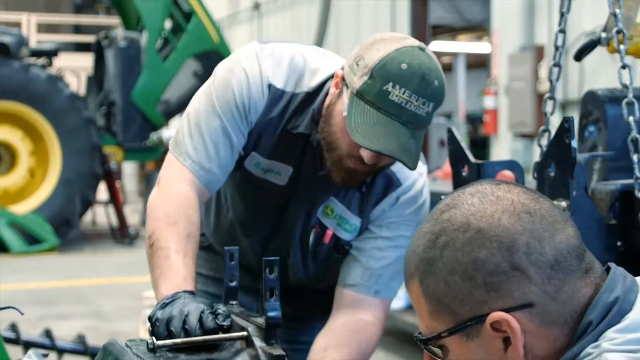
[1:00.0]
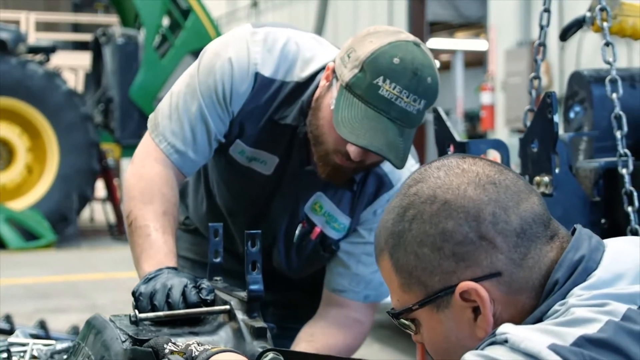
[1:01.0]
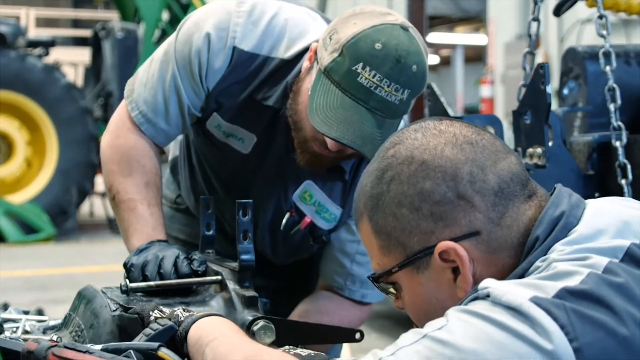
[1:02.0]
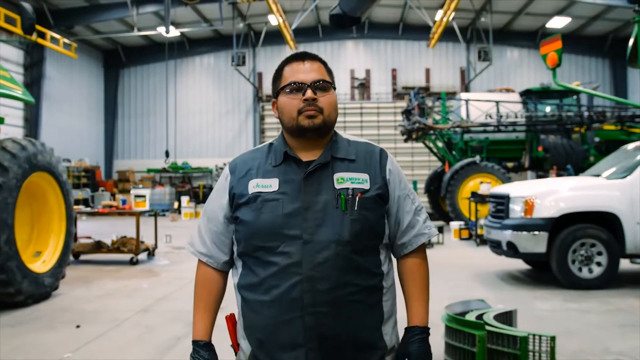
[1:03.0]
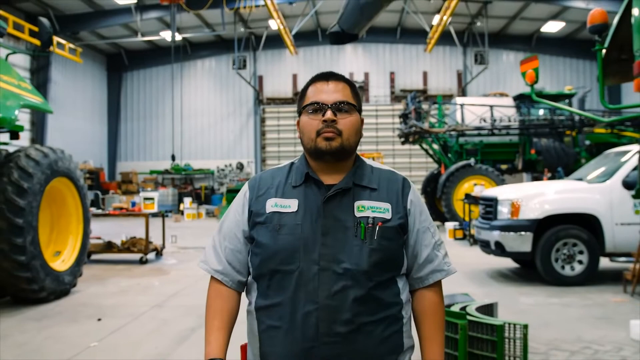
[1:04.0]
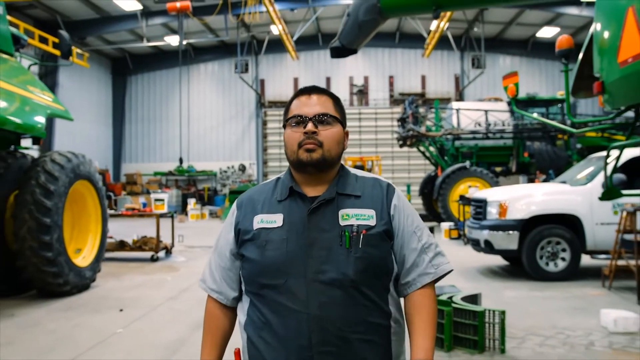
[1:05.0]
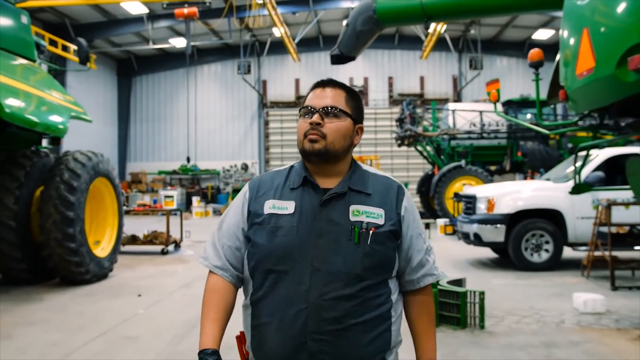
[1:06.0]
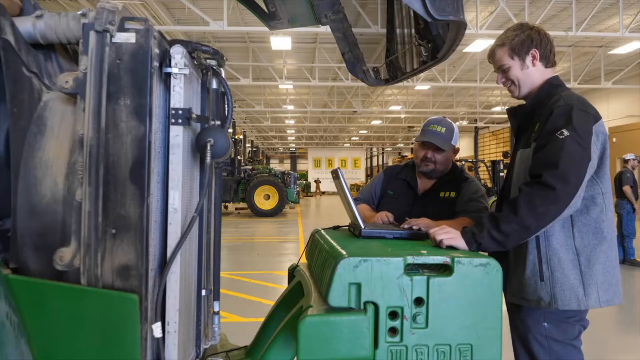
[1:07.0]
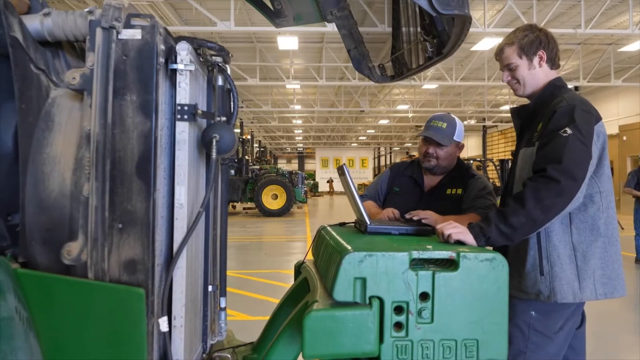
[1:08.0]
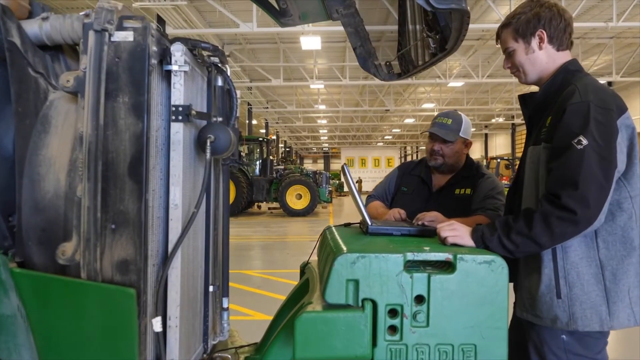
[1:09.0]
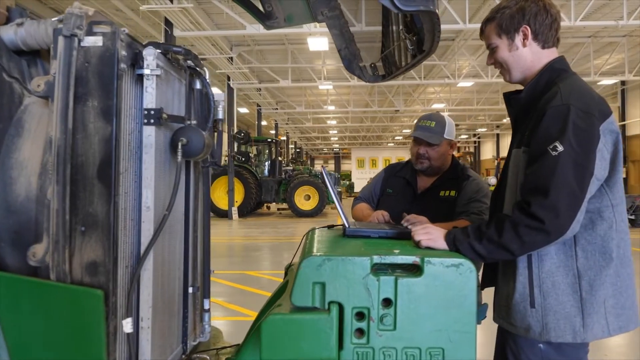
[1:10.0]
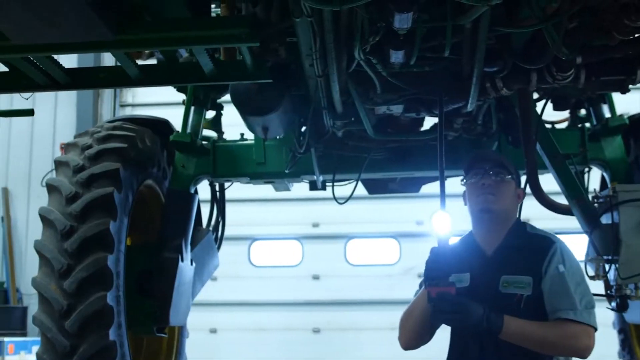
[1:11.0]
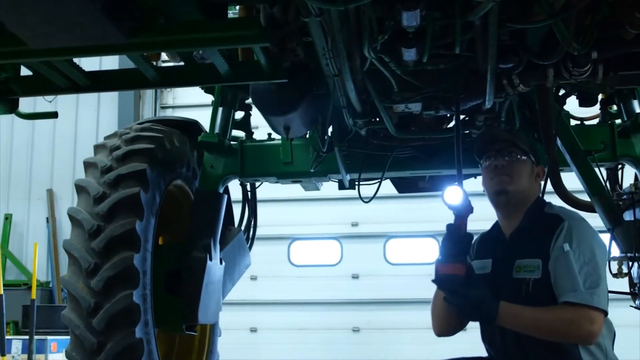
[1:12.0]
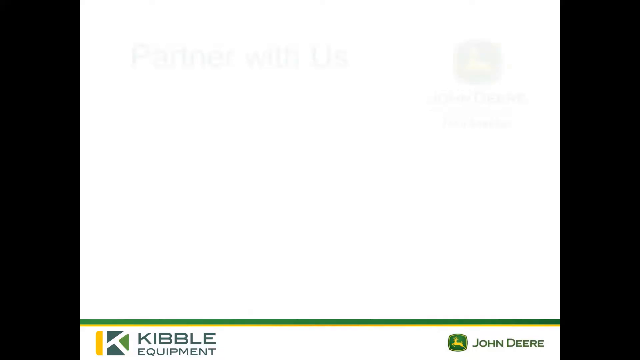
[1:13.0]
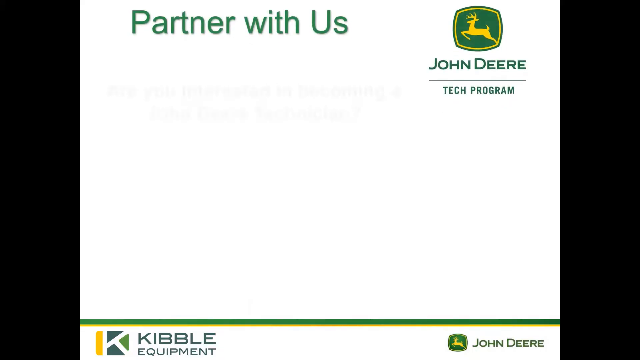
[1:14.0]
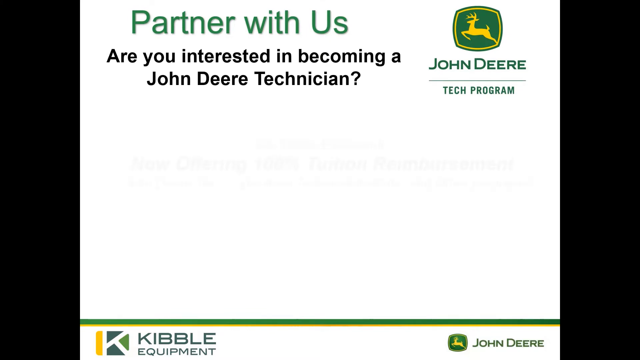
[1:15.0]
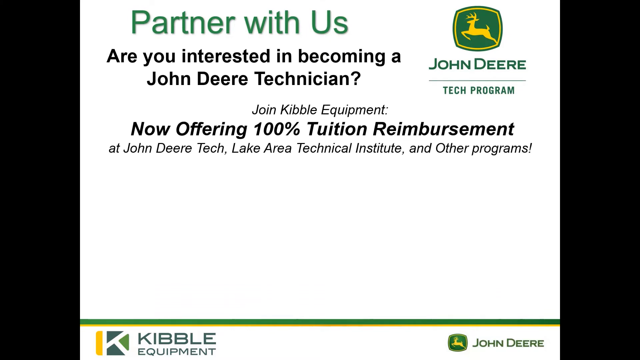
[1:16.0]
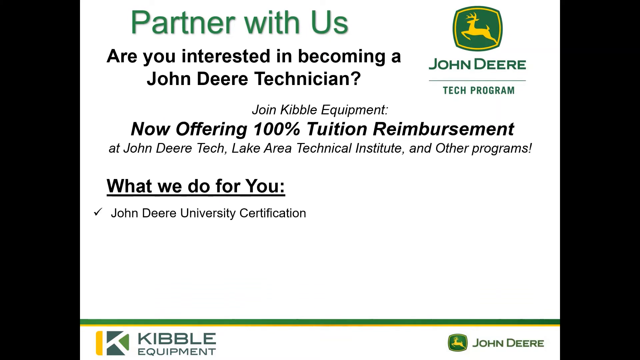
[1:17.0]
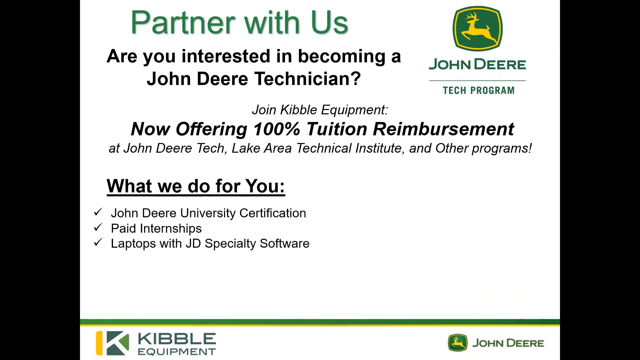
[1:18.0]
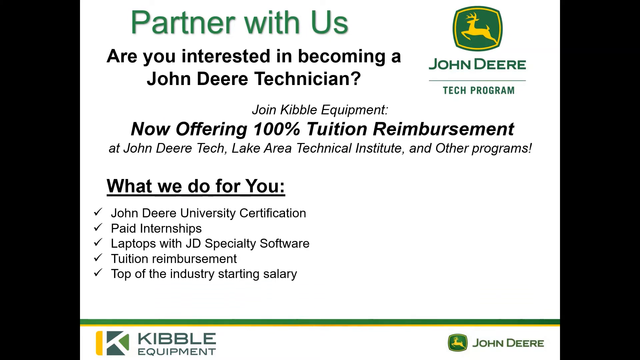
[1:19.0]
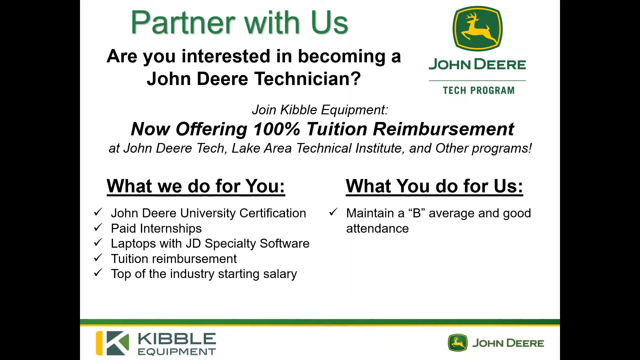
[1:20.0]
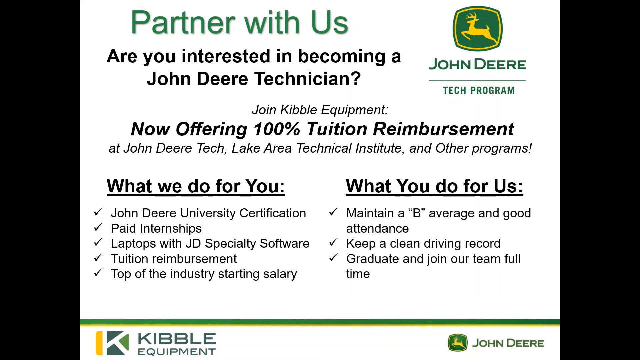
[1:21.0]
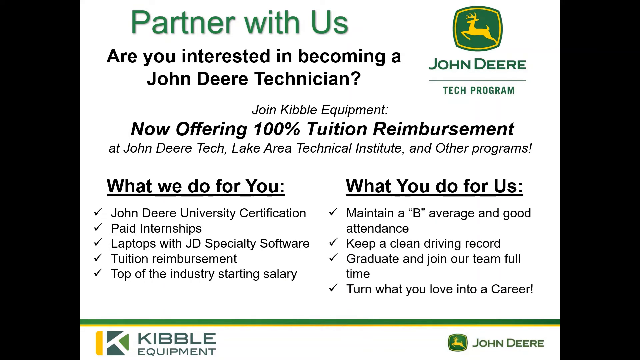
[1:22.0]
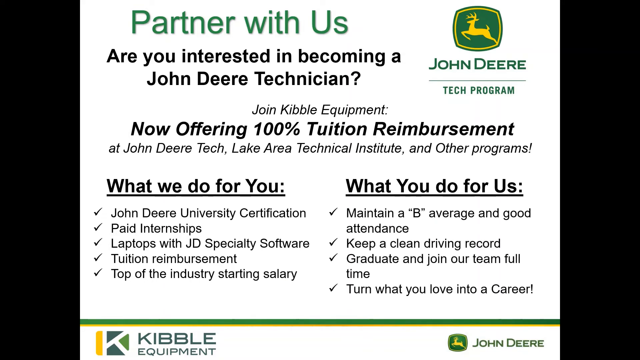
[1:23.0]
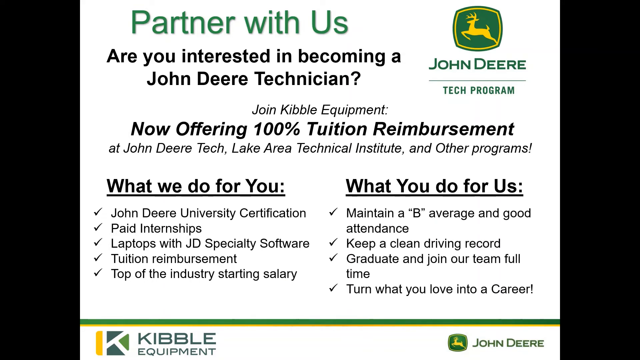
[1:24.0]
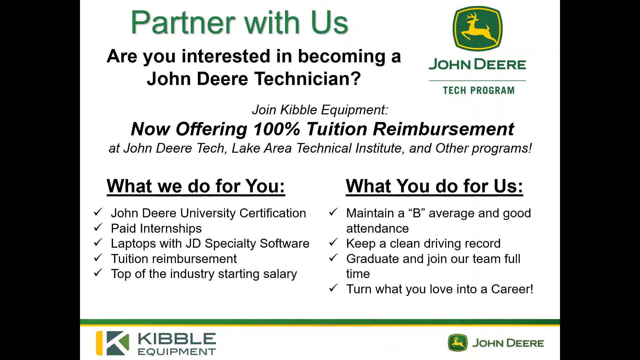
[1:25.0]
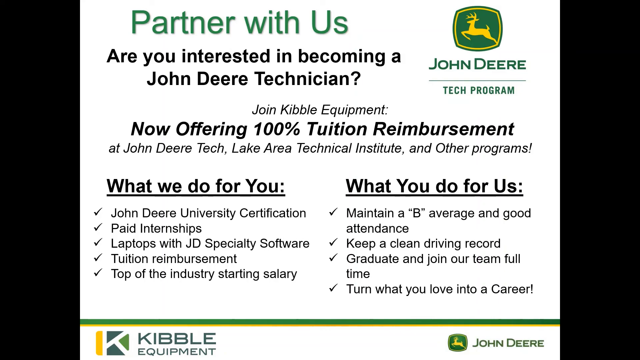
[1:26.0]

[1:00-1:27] Two men are working. The one in the back is shown more fully in the frame and has a black glove on his left hand. Only part of the man in the lower right-hand corner is visible, but the camera pans down a little to show a bit more of what they are working on. Next, a man is shown from about the waist up, wearing a dark and light grey shirt and safety goggles. He walks toward the viewer, with more John Deere equipment behind him and a white truck on the right side, looking right and then left as he walks. Two other people then work in a shop: the one toward the back is seated at some kind of green surface, while the man on the right side is standing. Both look at a computer screen on the green surface in front of them, and the view moves a little to the right as the standing man scrolls the mouse. A worker is then shown underneath a vehicle suspended above his head; mostly the underside and the back left wheel are visible. He holds a kind of bright light, shaped kind of like a drill at a right angle, and shines it up into the bottom of the vehicle. Finally, a white background in the center, leaving black bars on either side, comes on the screen. At the top, green text says "partner with us", and in the upper right-hand corner is a John Deere logo with "tech program" under it. Beneath "partner with us" it says "are you interested in becoming a John Deere technician?" and then "join Kibble Equipment now offering 100% tuition reimbursement at John Deere Tech Lake Area Technical Institute and other programs". A column headed "what we do for you" lists checkmarked items: "John Deere University Certification", "paid internships", and "laptops with JD specialty software tuition reimbursement top of the industry starting salary". Next to it, a column headed "what you do for us" uses checkmarks as bullet points again: "maintain a B average and good attendance", "keep a clean driving record", "graduate and join our team full time", and "turn what you love into a career". Each of these points appears one at a time.